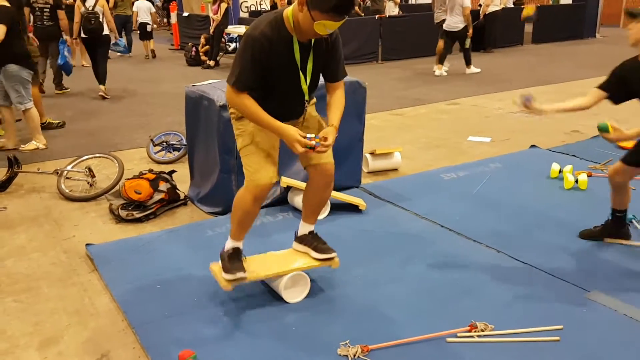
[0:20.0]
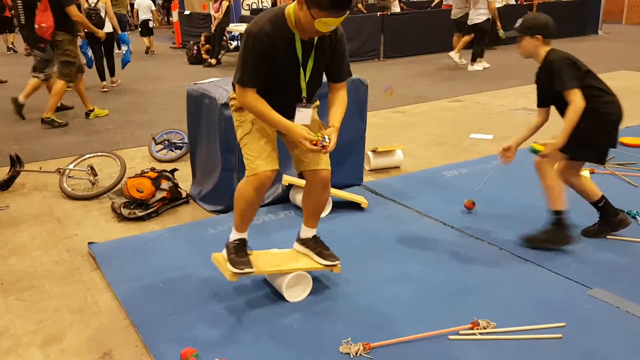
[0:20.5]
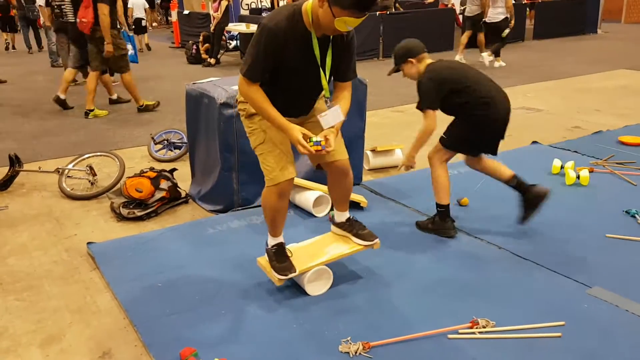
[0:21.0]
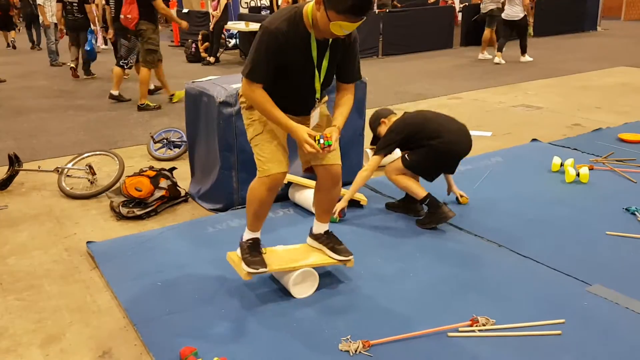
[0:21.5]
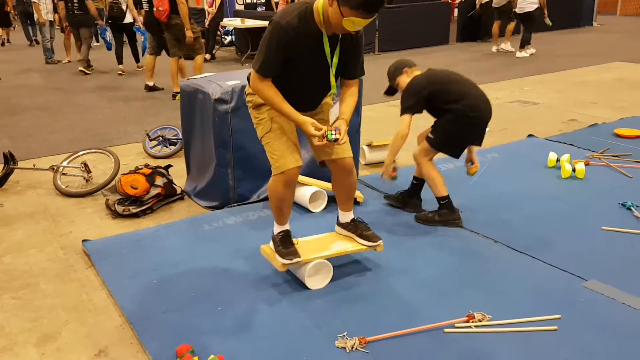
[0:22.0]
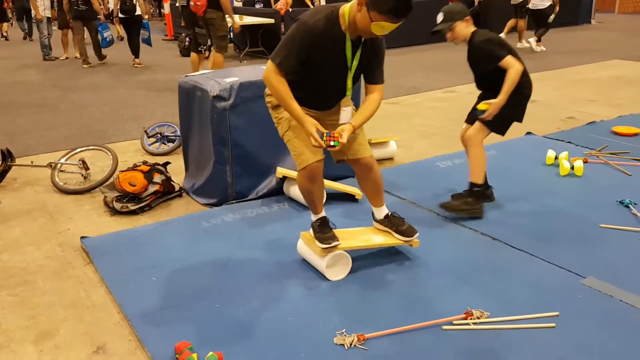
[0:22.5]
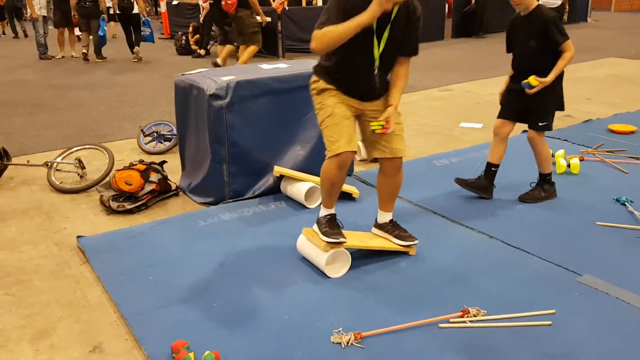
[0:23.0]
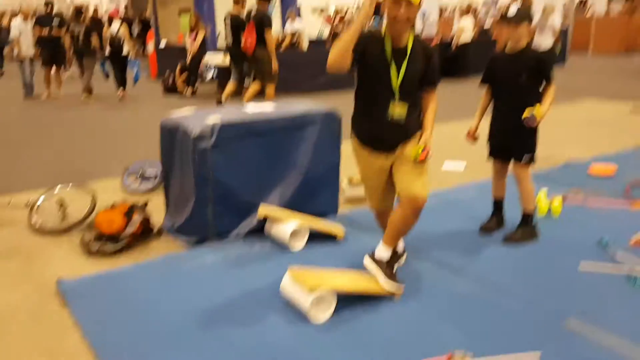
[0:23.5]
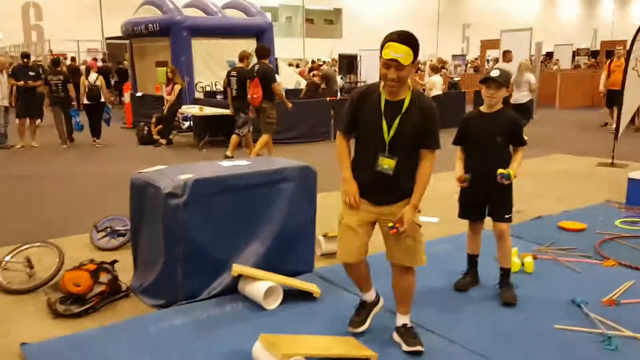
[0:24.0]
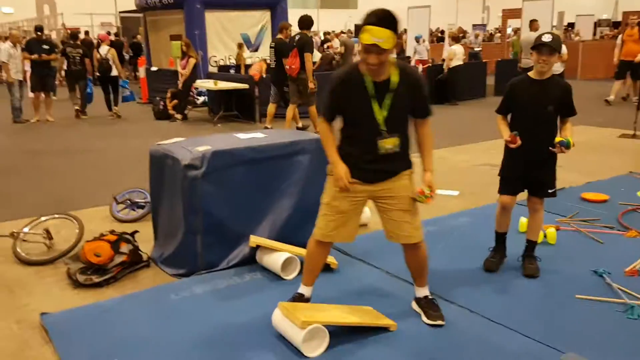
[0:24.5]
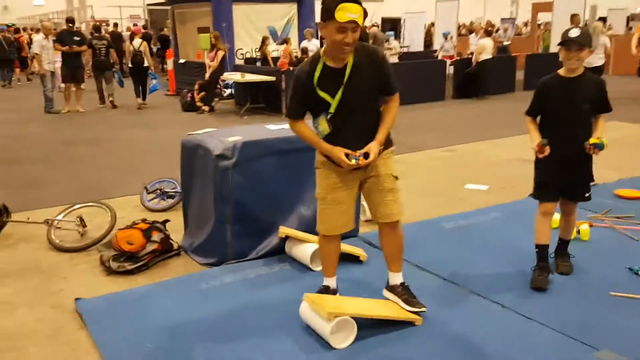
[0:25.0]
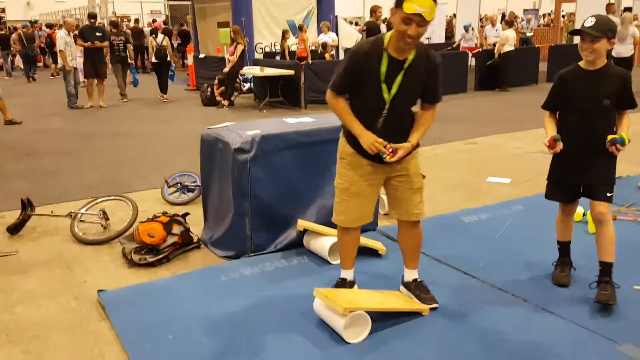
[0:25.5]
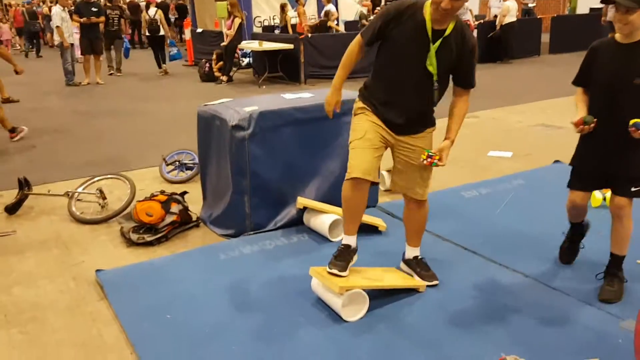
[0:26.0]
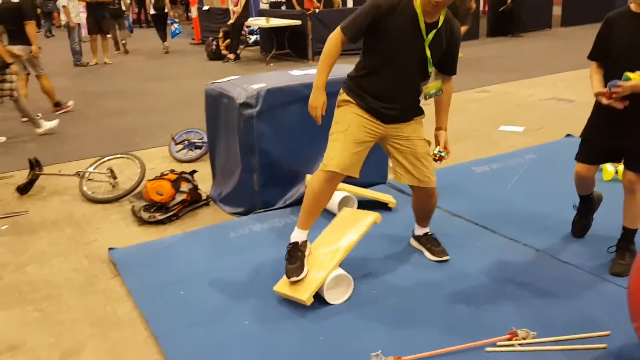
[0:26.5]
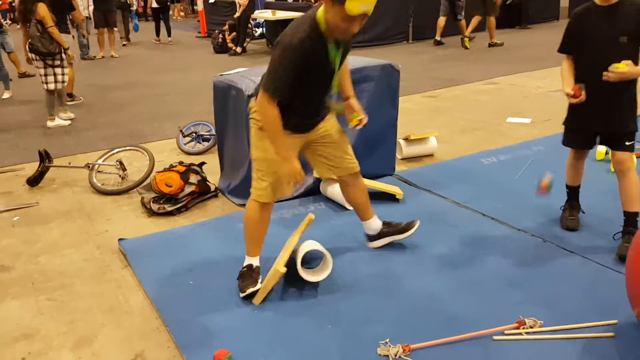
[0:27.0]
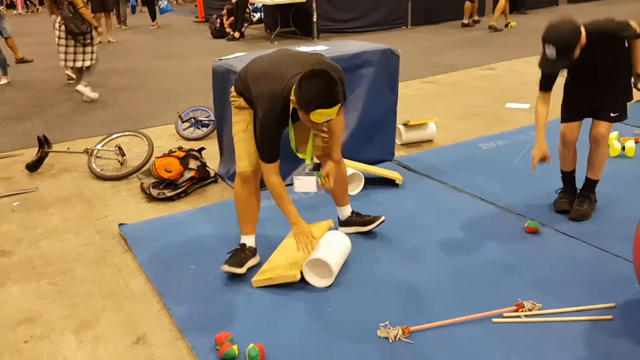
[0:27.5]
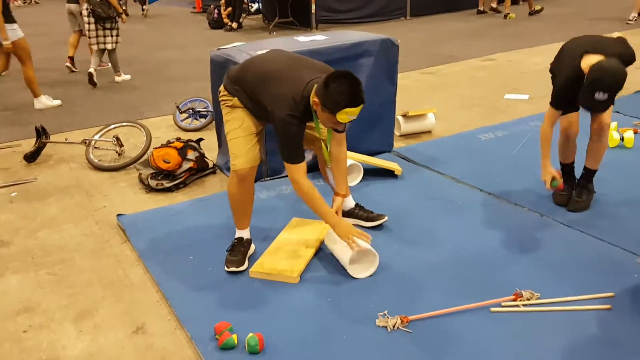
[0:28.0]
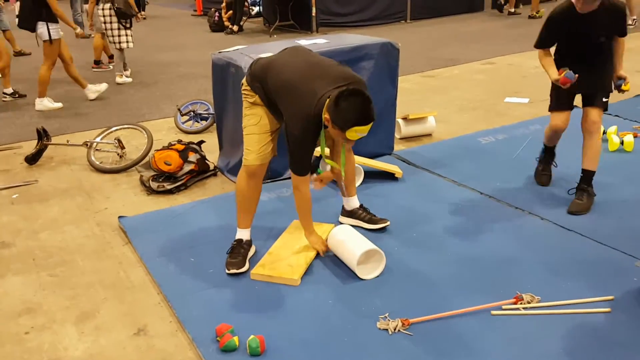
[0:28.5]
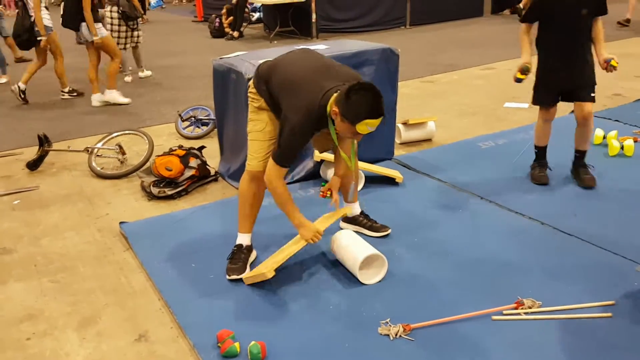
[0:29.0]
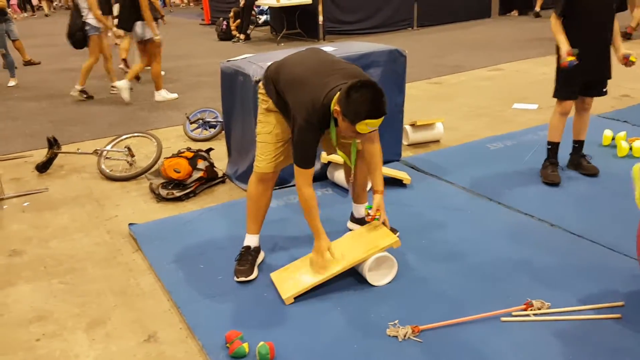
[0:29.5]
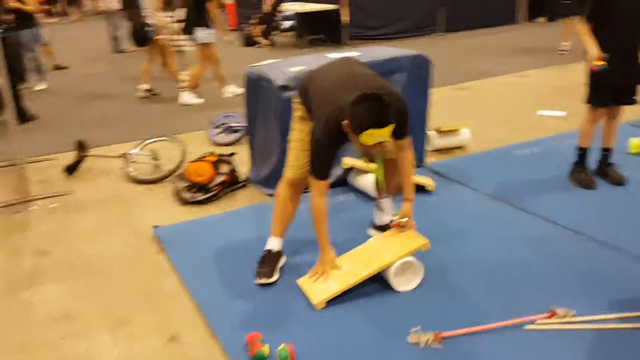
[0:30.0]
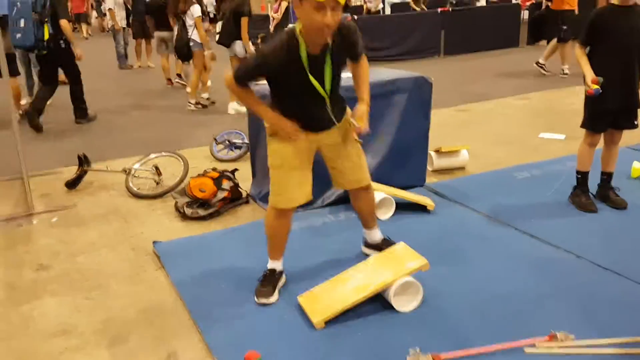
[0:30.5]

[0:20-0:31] The kid is still balancing on the board on the PVC pipe, now wearing a yellow blindfold and holding a Rubik's Cube that he is trying to solve, kind of moving it all around. He appears to fall off the board, goes to get back on, slips, and the board comes off, revealing divots on the end of the board that help stop the pipe from falling off. He then gets back on the board. A little boy, maybe around fifth grade, is kind of interacting with him a lot, watching what is going on; he wears an all-black outfit with a black baseball cap bearing some type of white logo, and shorts. Nearby there is what almost looks like a bunch of circus items, such as spinning tops and a bicycle with just one wheel, apparently available for people to try out.